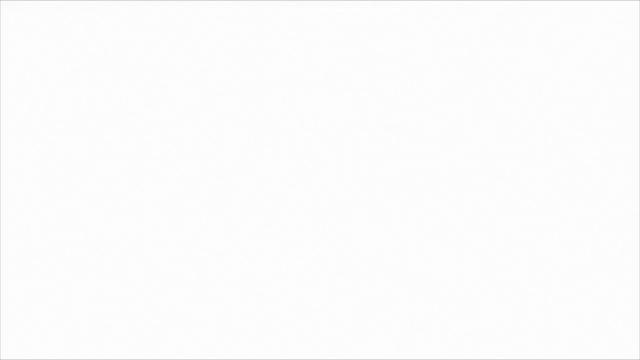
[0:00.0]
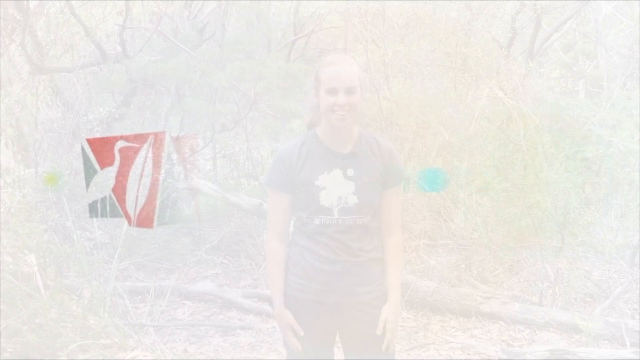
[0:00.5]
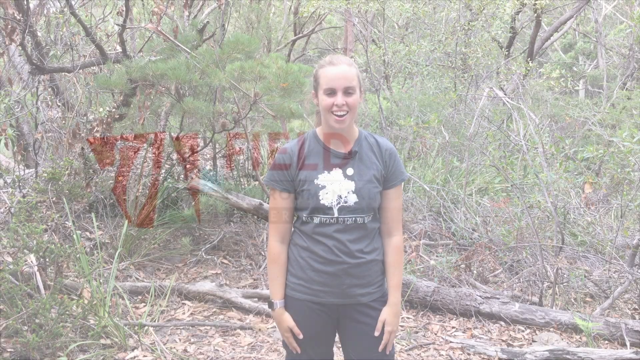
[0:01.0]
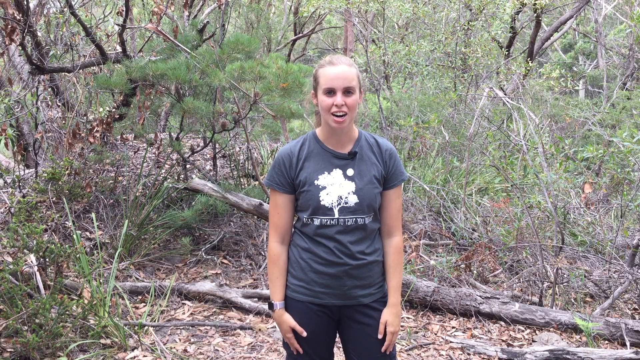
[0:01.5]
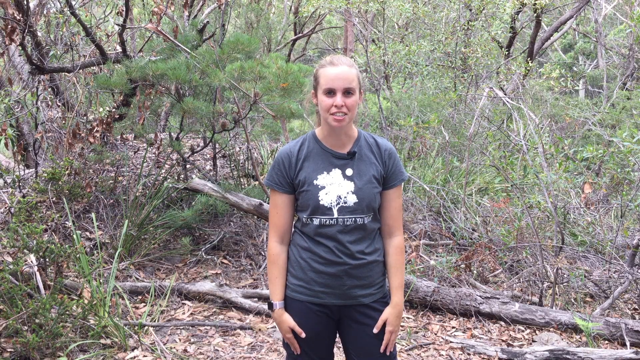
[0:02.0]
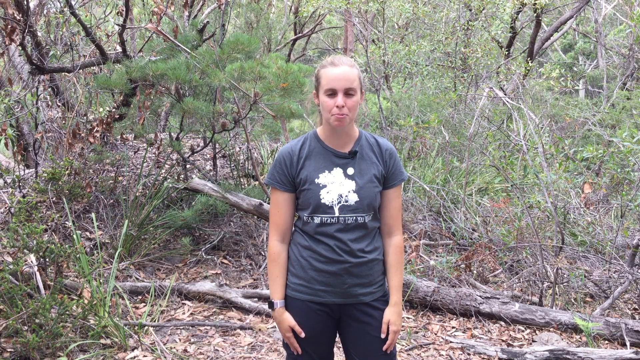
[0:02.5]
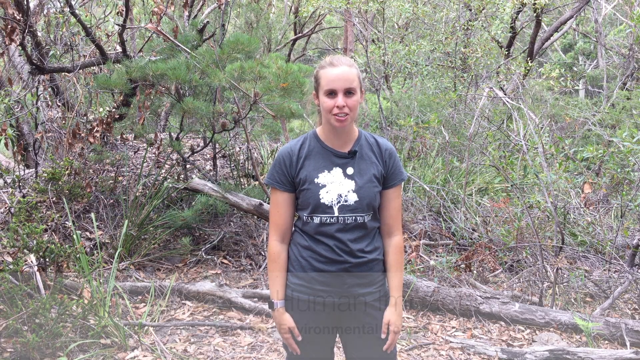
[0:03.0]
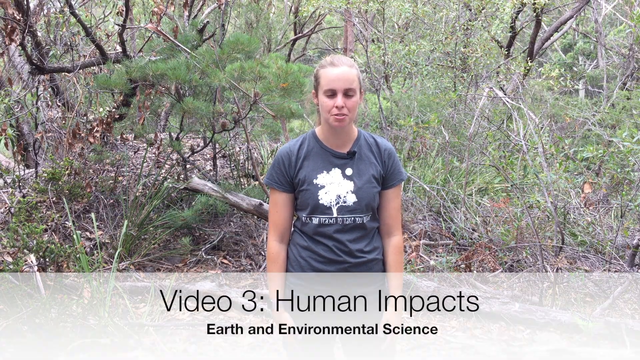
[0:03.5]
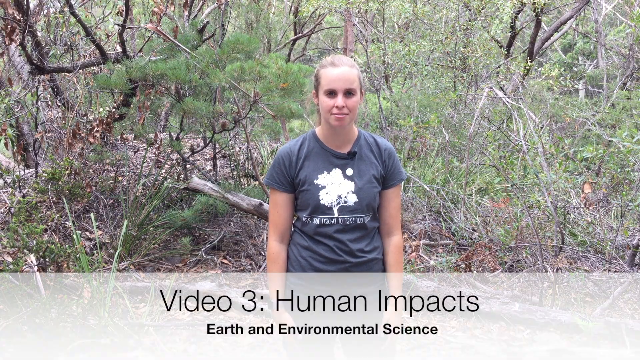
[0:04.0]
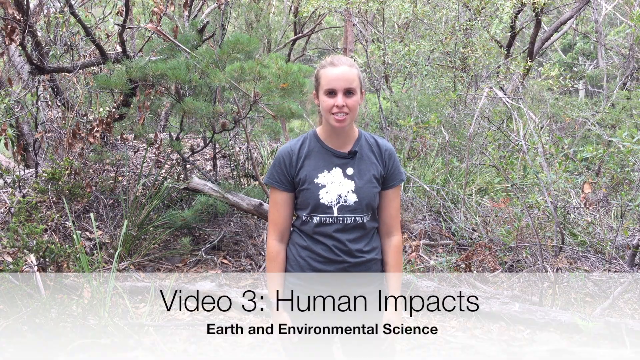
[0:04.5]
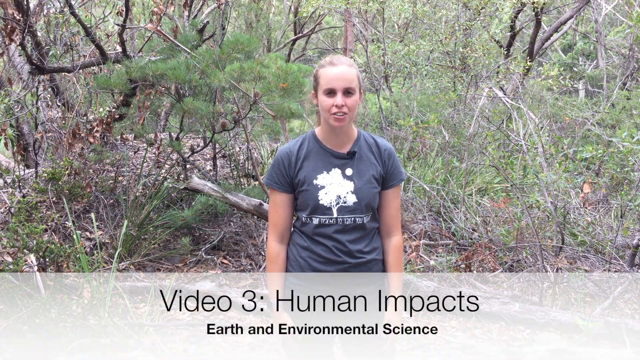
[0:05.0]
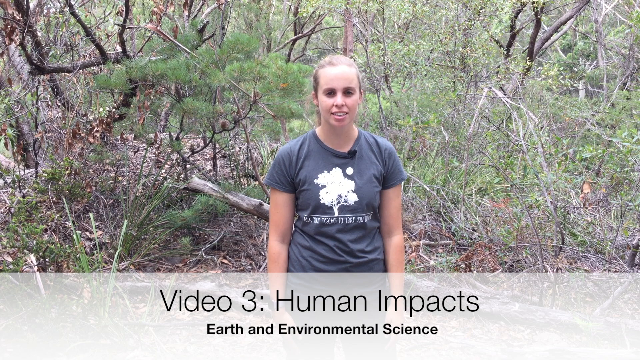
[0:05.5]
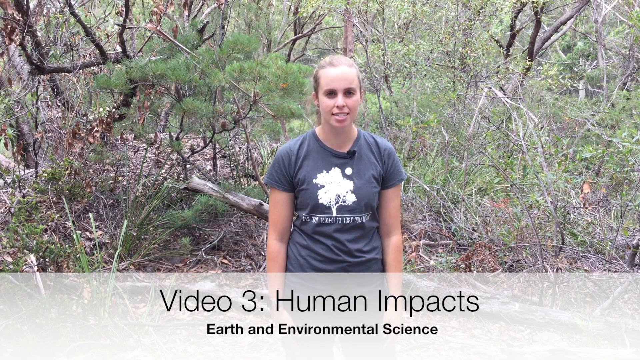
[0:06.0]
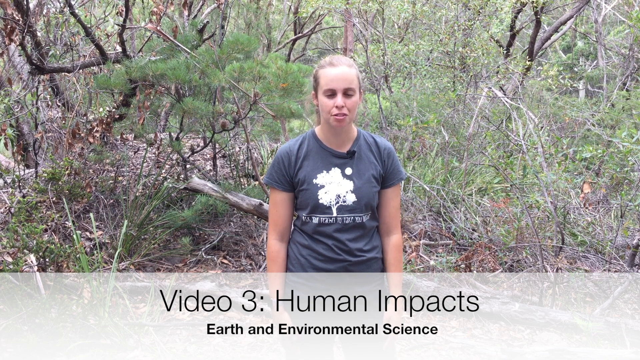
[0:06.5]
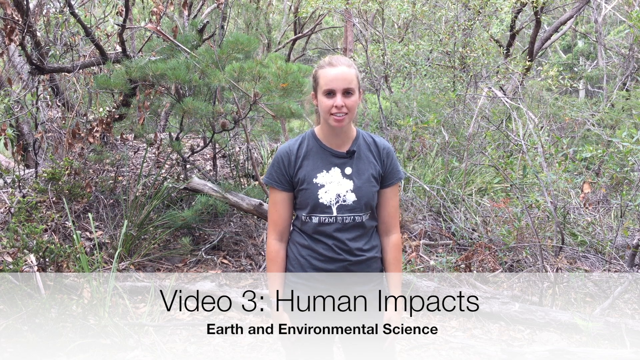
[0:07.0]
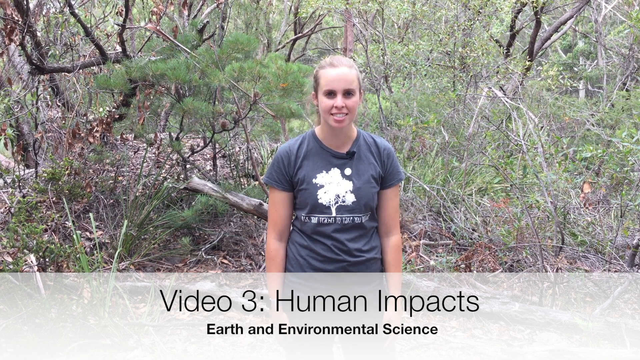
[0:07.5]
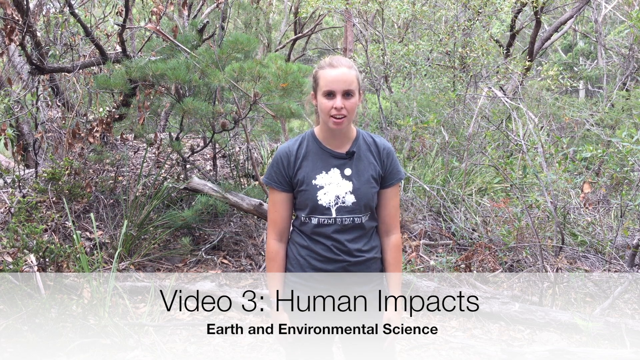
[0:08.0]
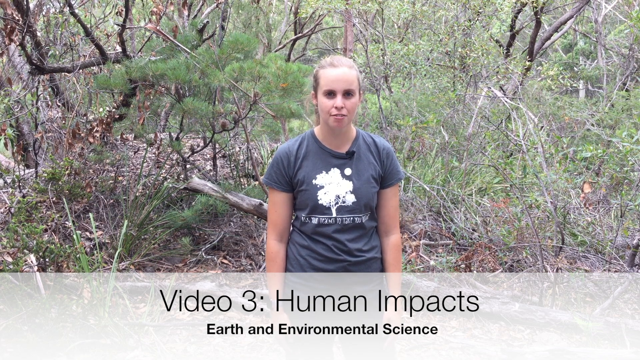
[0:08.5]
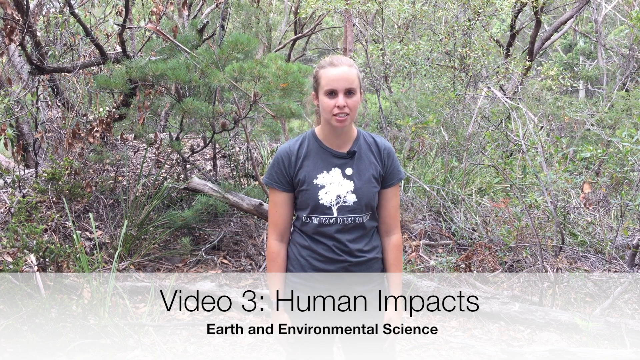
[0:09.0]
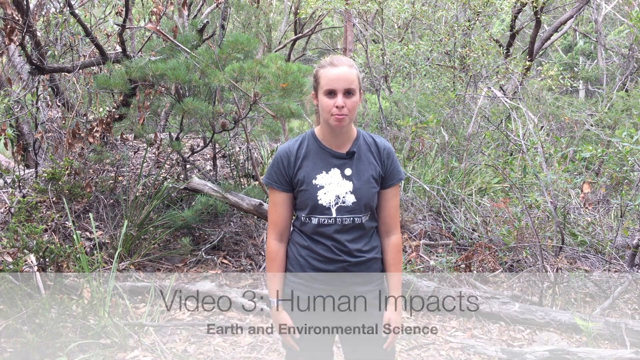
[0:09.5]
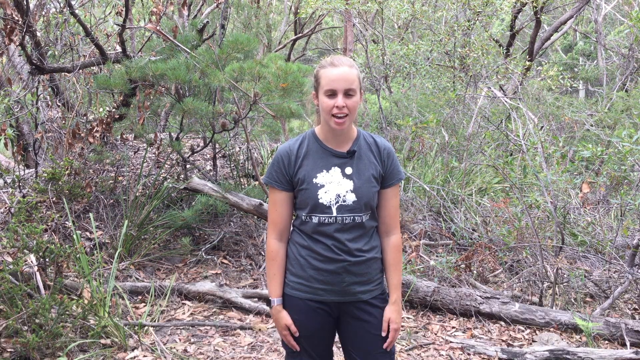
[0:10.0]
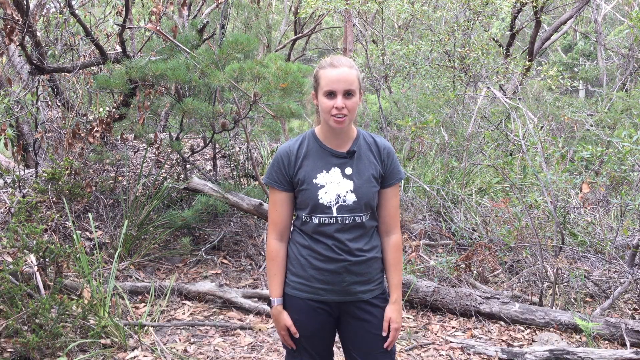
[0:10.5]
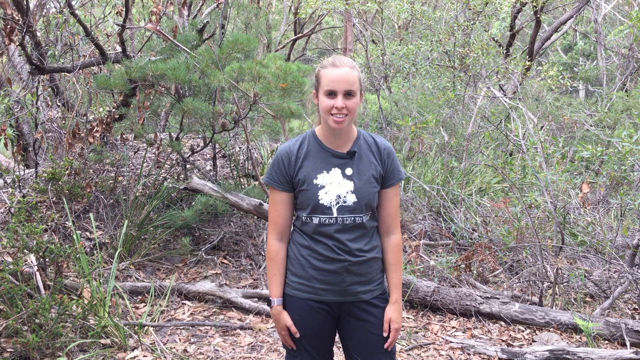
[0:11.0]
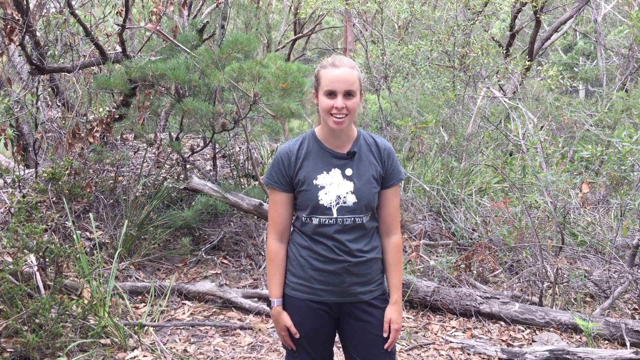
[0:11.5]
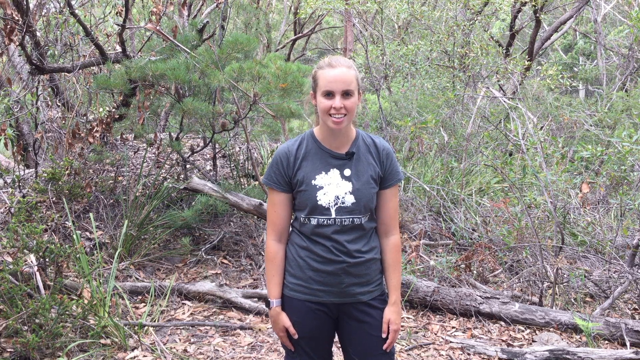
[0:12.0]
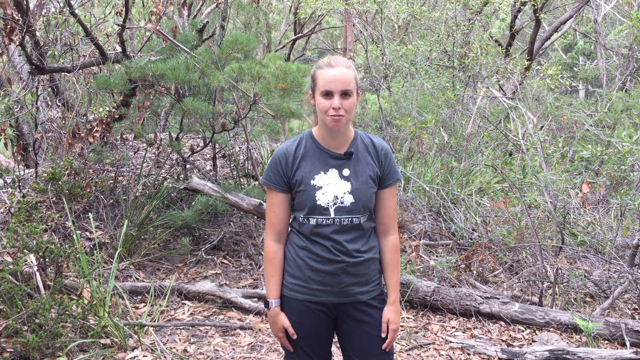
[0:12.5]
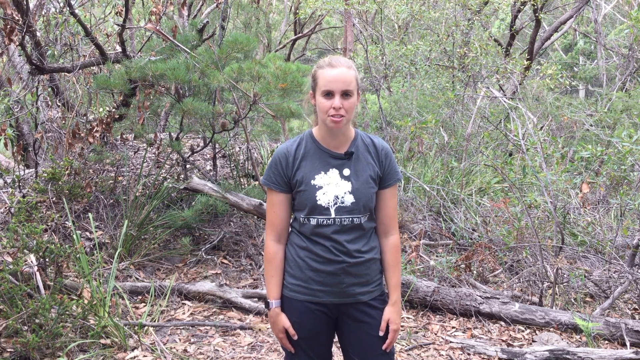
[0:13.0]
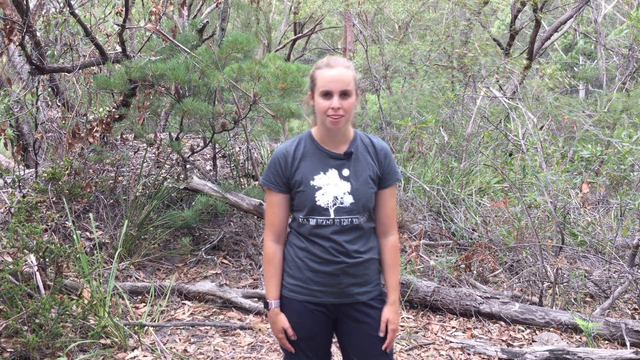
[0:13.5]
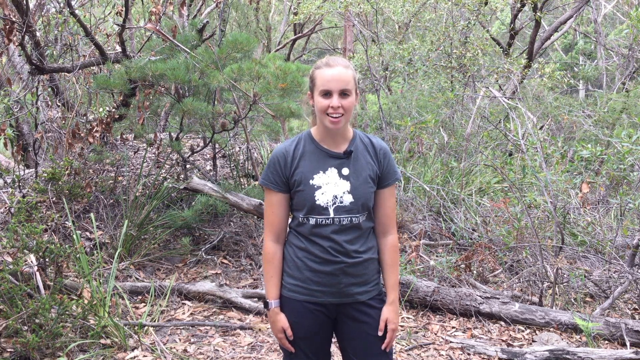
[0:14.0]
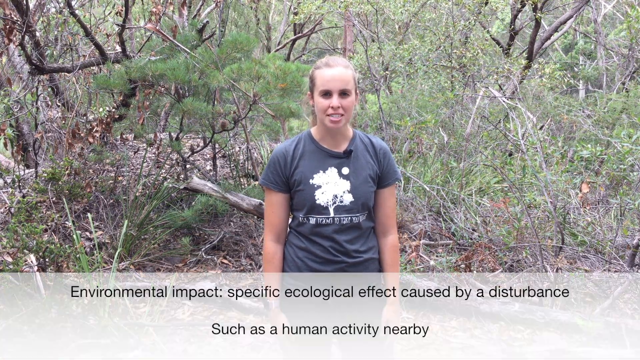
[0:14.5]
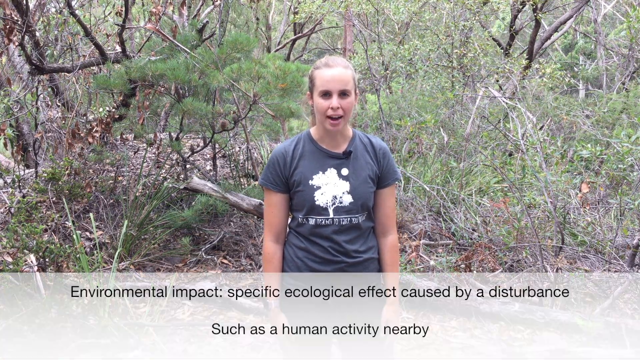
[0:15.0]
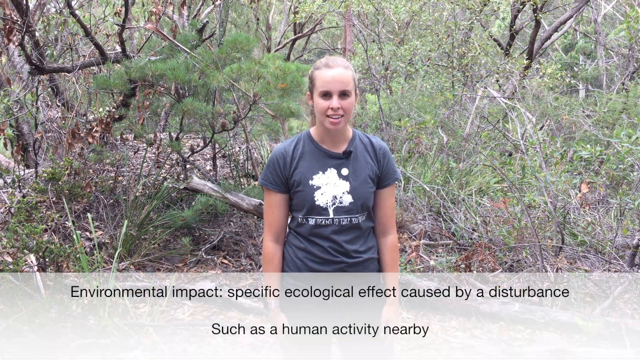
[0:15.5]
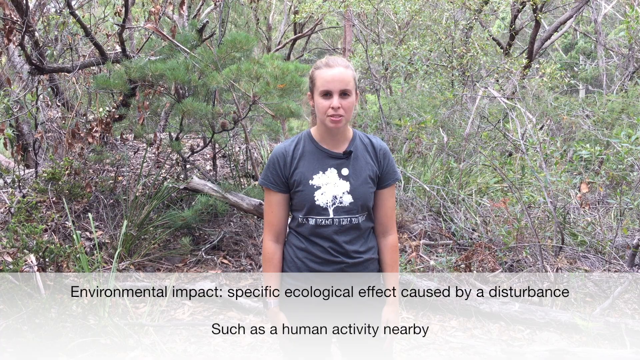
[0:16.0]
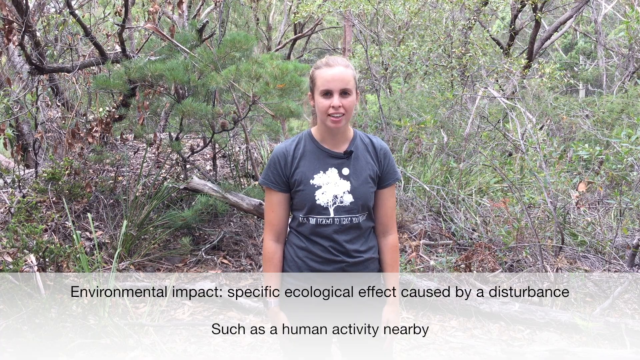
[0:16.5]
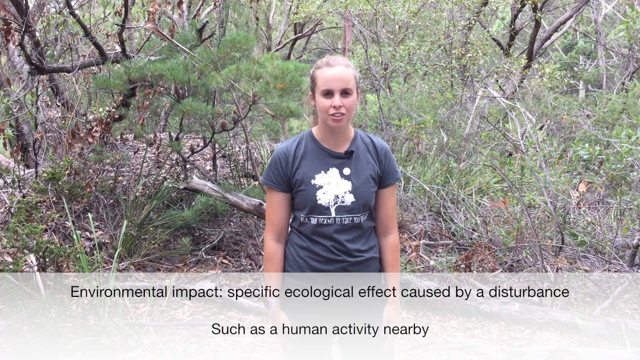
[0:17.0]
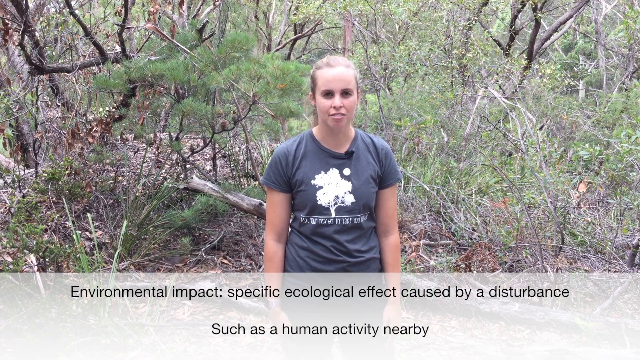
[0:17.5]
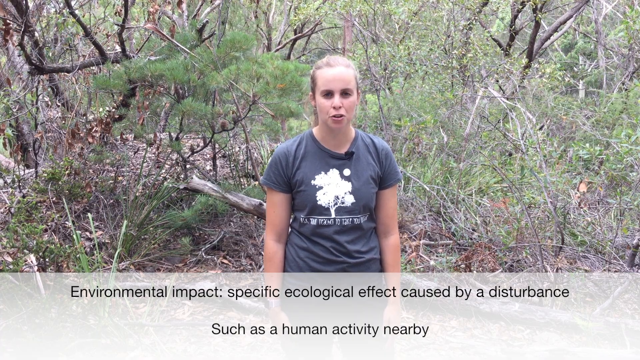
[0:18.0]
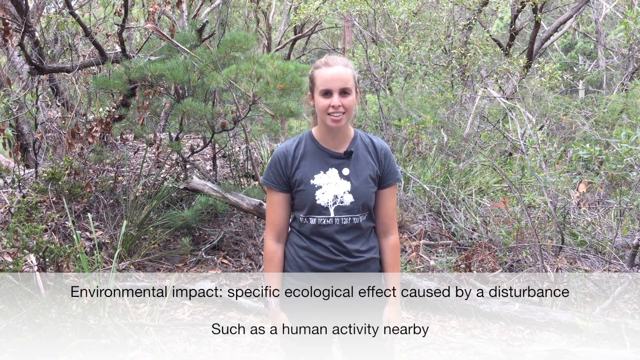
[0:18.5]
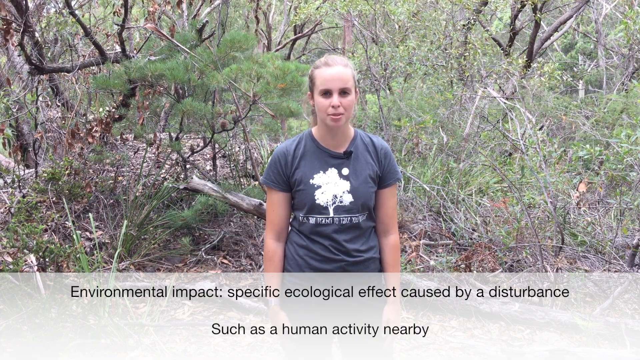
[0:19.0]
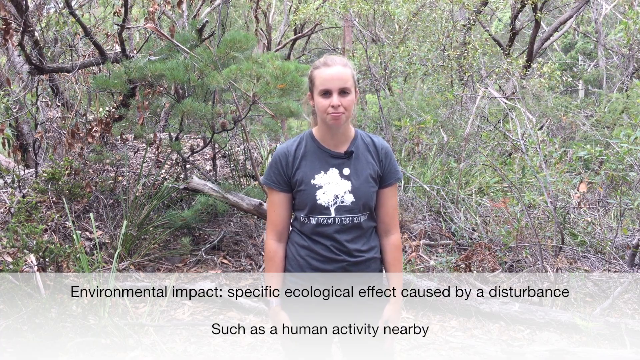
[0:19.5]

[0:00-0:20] A young woman with her hair tied back in a ponytail is standing in what appears to be the centre of a forest. She wears a short-sleeved black T-shirt with an image of a tree on it and black trousers, and she talks directly to the camera. A caption reads "Video 3, Human Impacts". She seems to be smiling and looks quite cheerful, with her hands on her thighs. The caption then changes to read "environmental impact. Specific ecological effect caused by a disturbance such as human activity nearby." The background is all trees, some standing and some fallen, with green leaves.